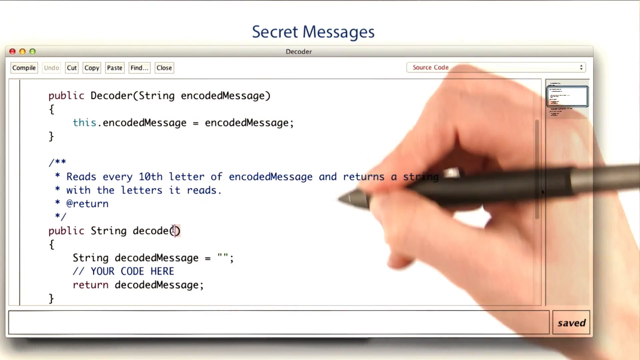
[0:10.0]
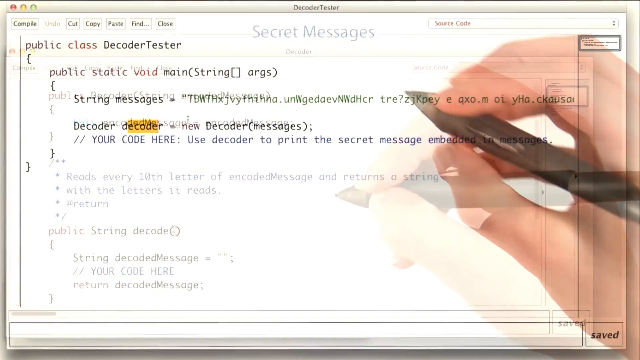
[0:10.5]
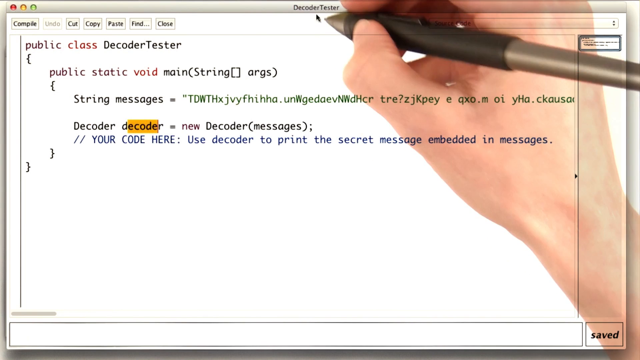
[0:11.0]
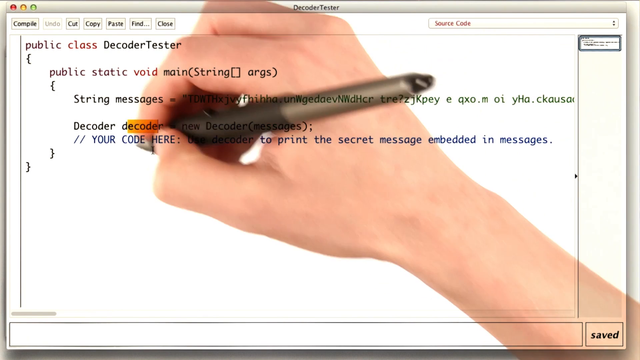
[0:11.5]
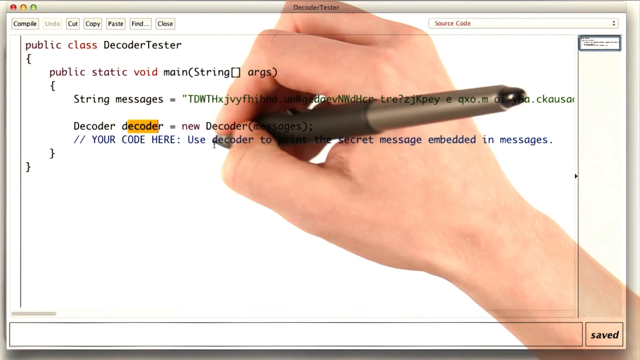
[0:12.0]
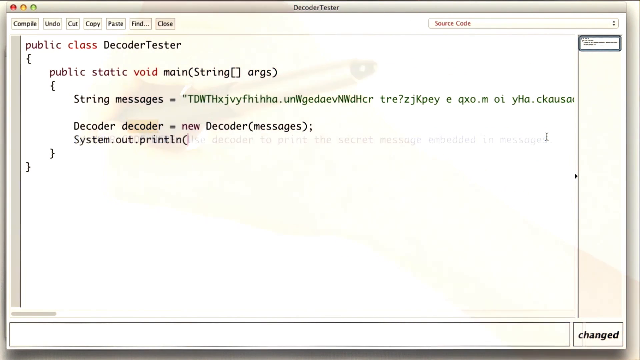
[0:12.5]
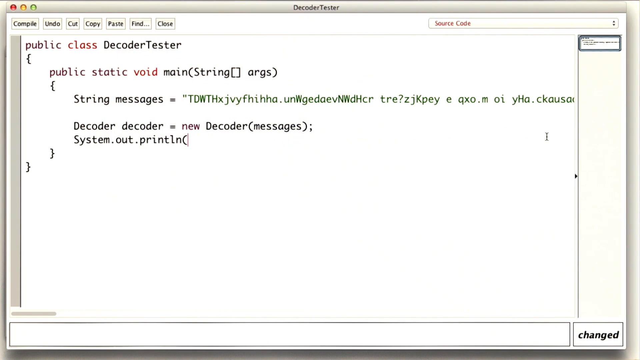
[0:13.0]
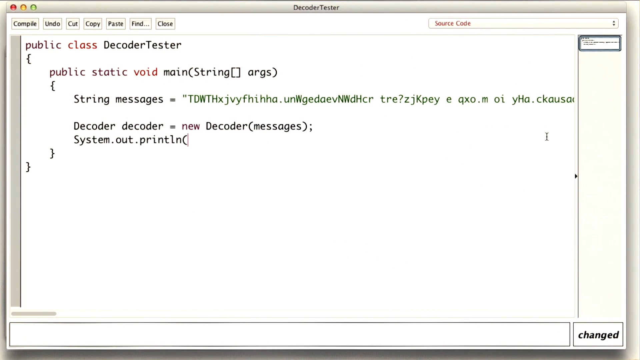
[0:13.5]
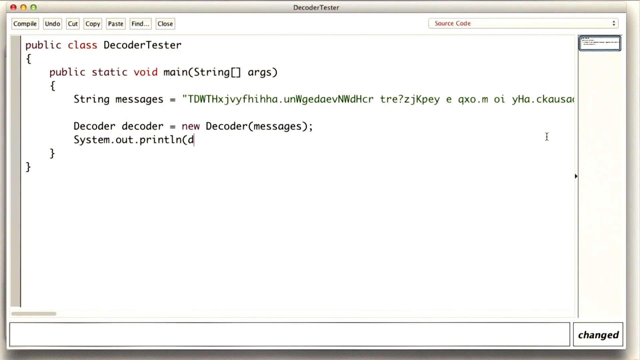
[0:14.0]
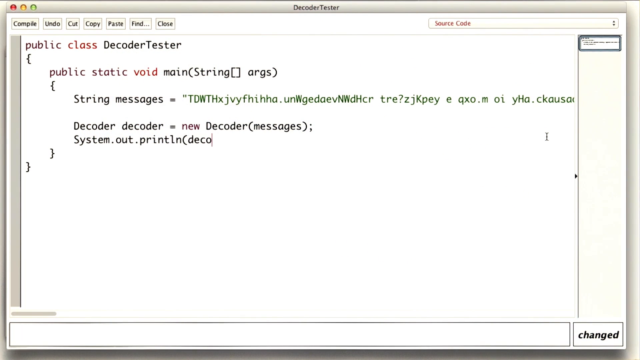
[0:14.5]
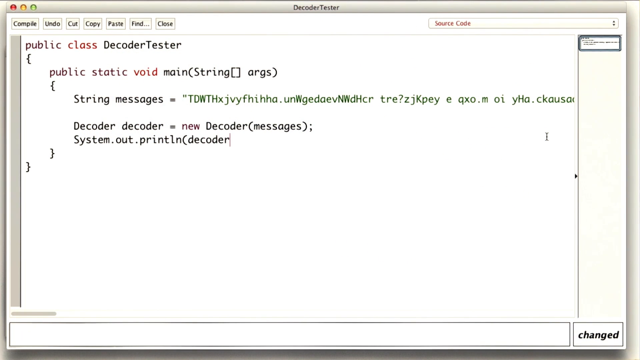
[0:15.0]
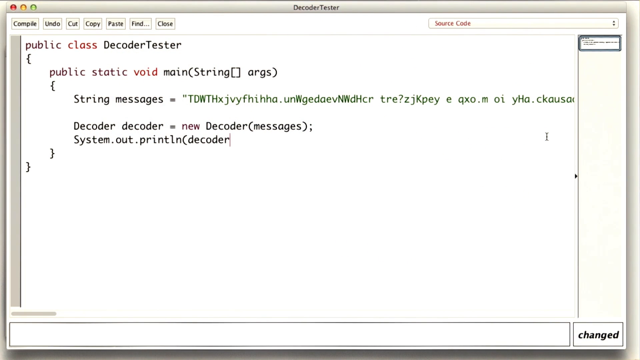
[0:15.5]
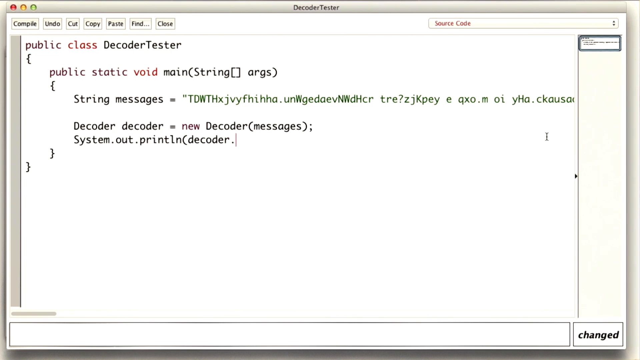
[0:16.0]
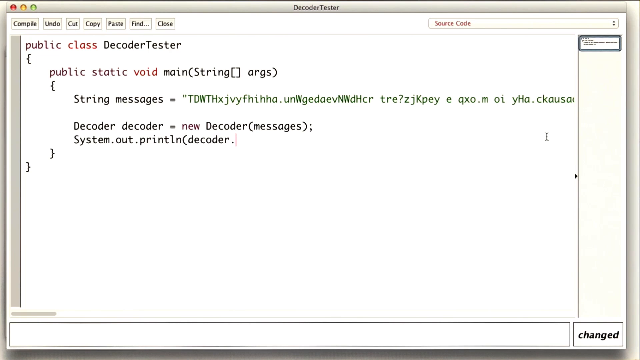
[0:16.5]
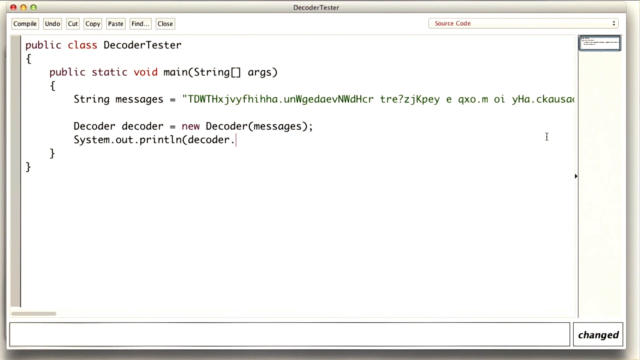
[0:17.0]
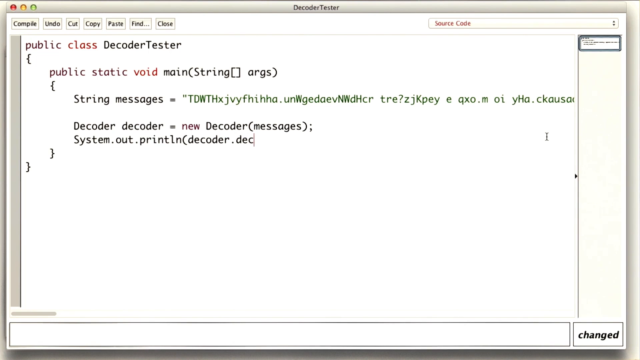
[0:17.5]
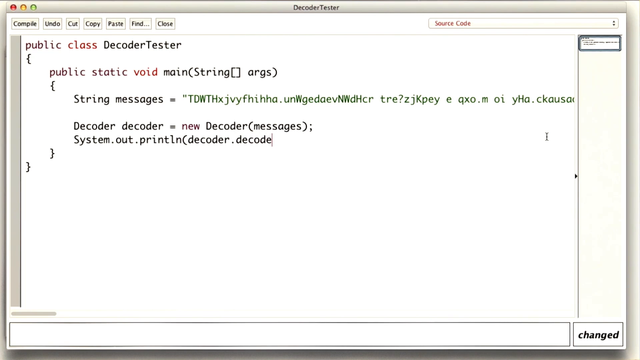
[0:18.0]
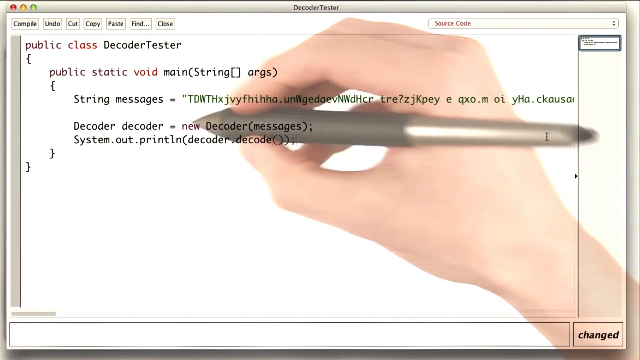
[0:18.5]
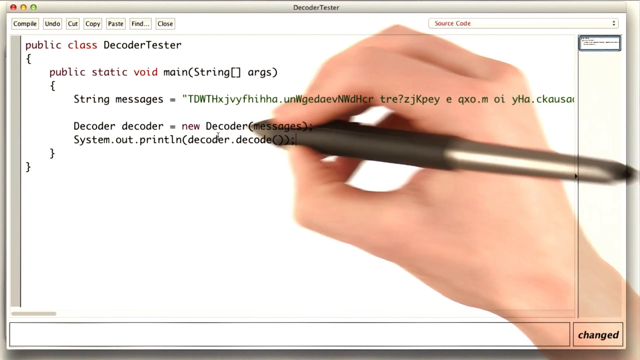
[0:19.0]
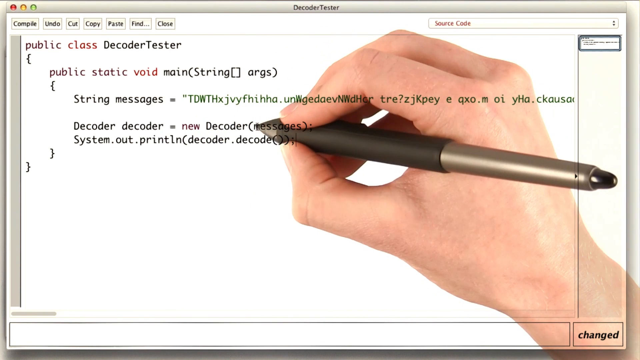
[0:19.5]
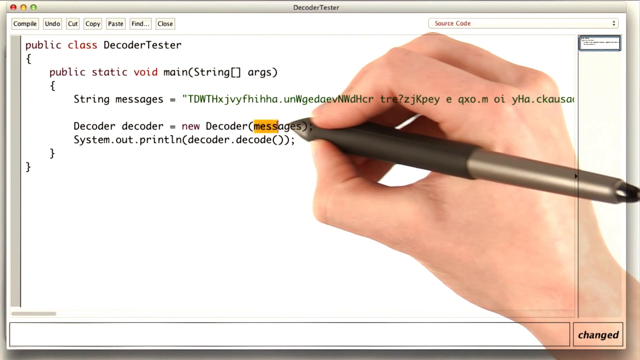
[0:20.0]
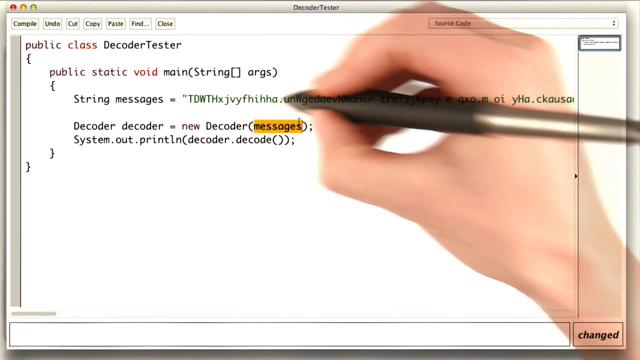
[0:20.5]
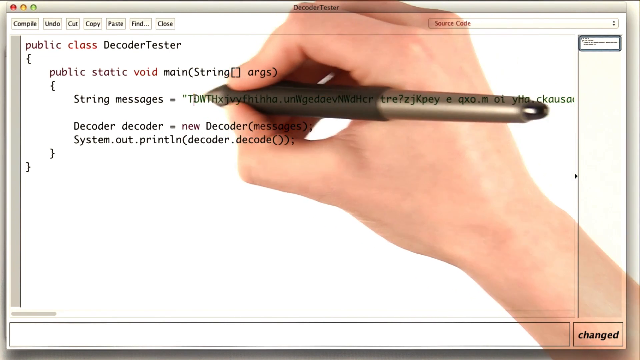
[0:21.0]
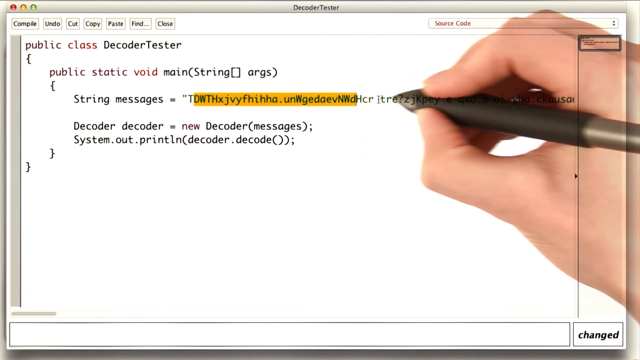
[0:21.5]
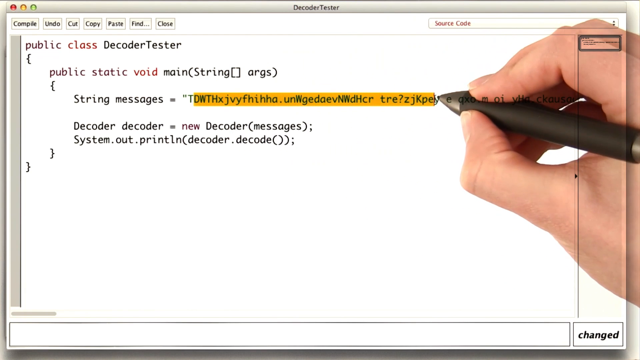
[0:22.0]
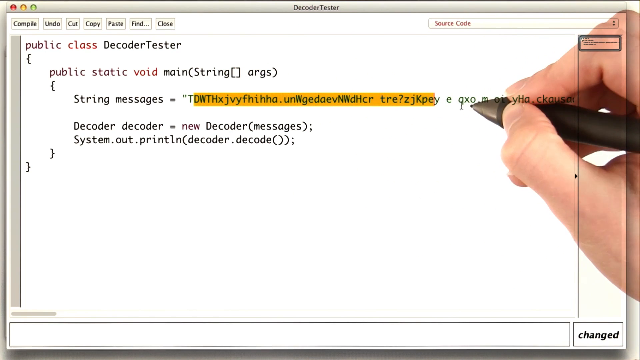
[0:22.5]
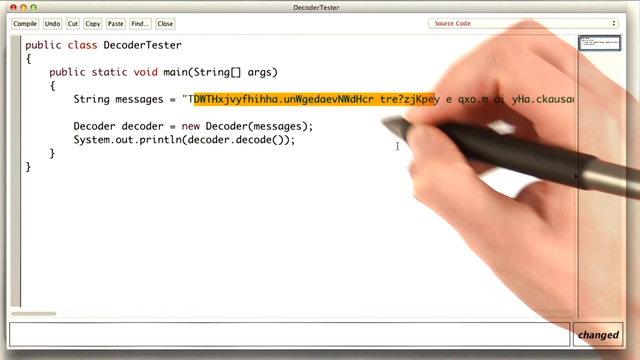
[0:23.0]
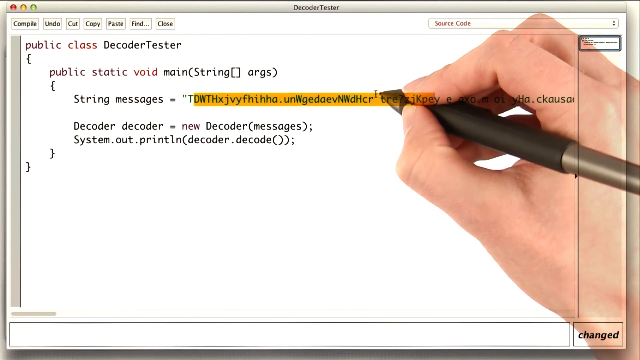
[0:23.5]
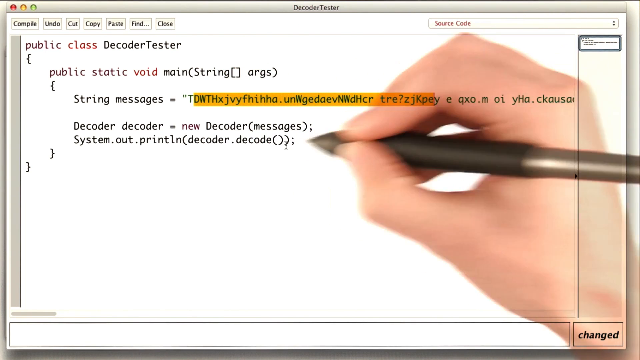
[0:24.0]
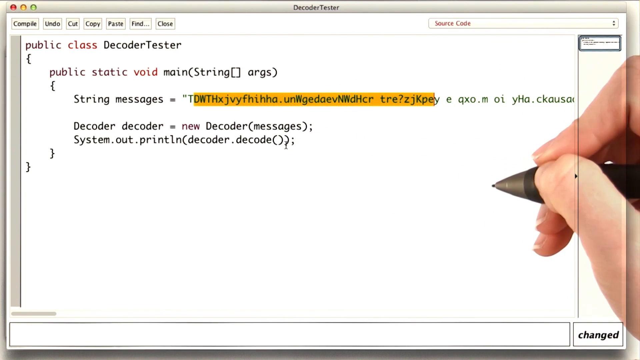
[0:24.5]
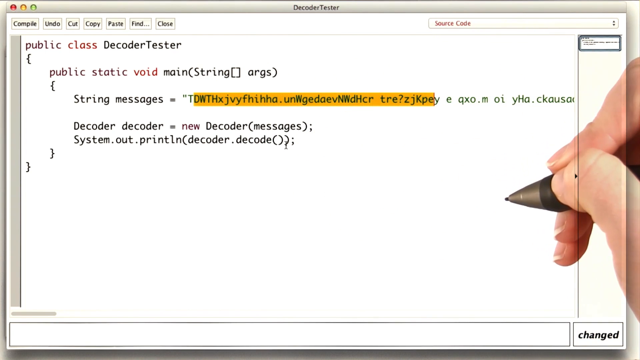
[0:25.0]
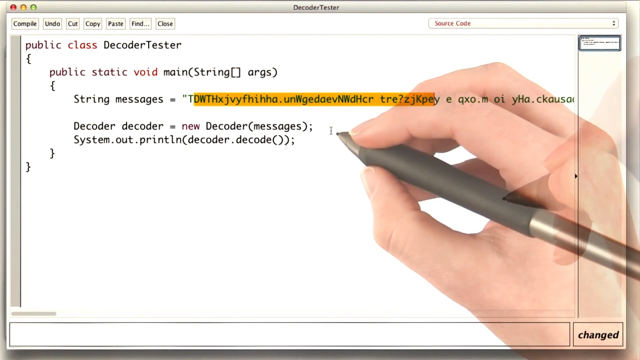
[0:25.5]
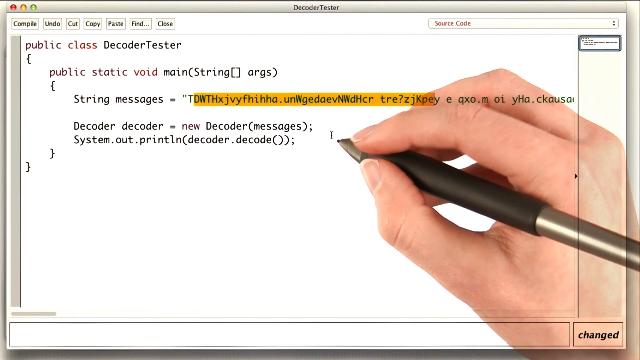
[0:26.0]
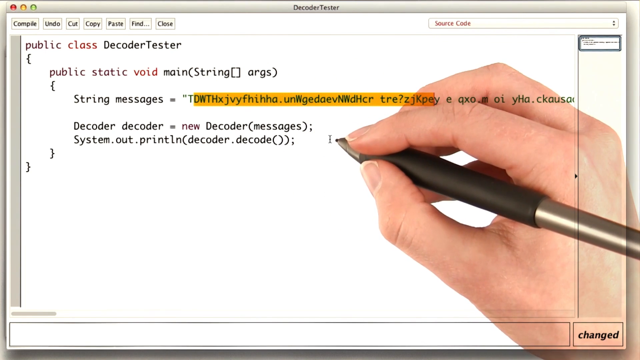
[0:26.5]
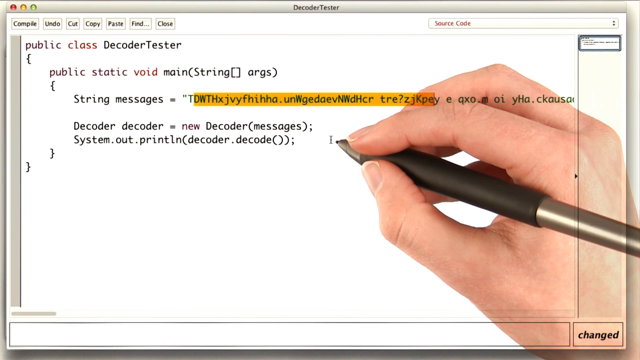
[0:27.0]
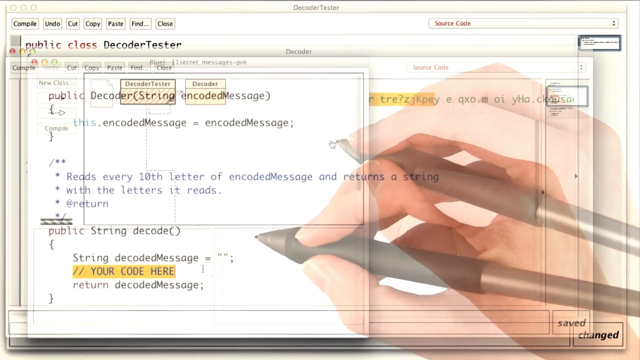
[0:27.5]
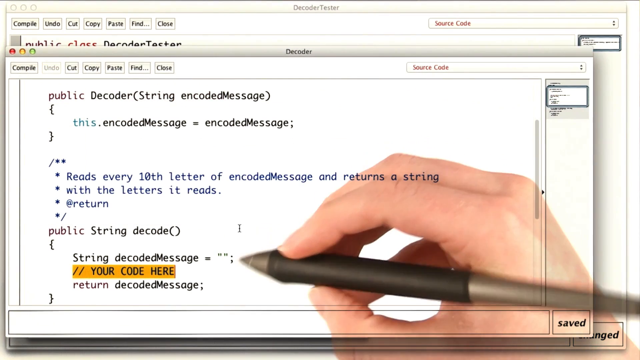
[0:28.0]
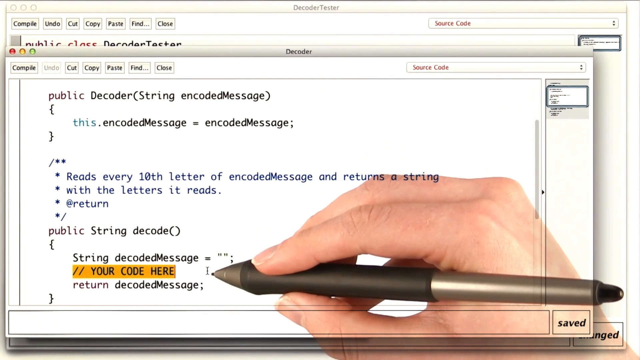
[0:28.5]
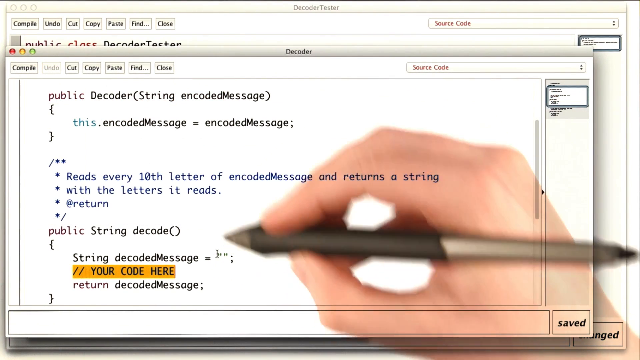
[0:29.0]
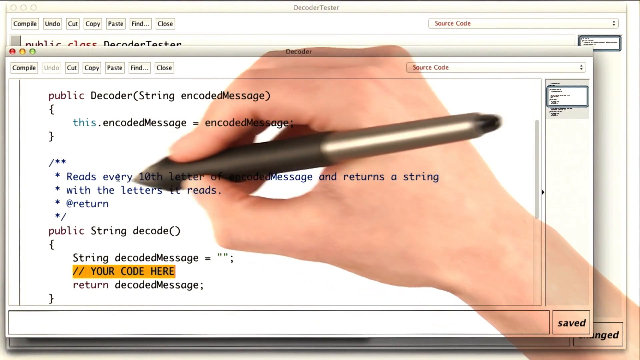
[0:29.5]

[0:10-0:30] A person holding a black pen in their right hand writes on the screen, changing the writing on top of a decoder tester page as they change words and write different code over it. The hand disappears as the decoder tester page is rewritten. At the top it says "public class decoder tester, public static void, main string, args", followed by "string messages equal" and a long run of jumbled letters. Below that it says "decoder decoder equals new decoder messages", then "System.out.println" and "decoder.decoder.decode". The hand comes back and uses the pen to highlight the word decoder and the string of jumbled letters. The person then goes to the right side, opens another page, and highlights the words "your code here", then highlights "every tenth". The hand looks to be that of a white person.